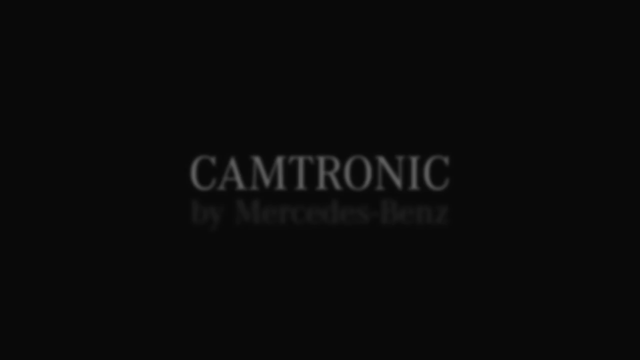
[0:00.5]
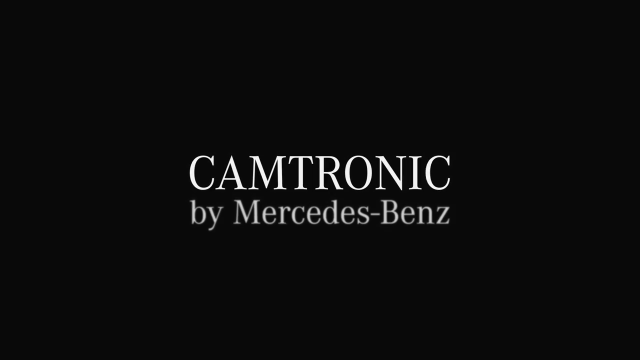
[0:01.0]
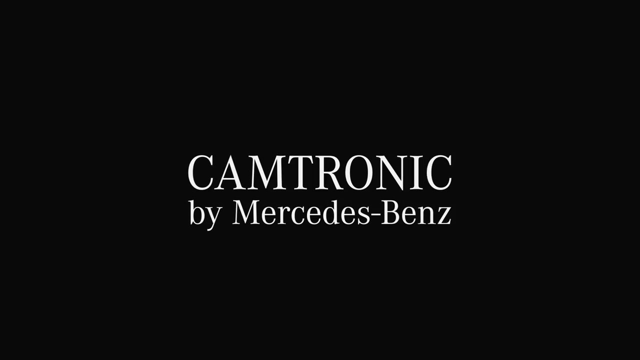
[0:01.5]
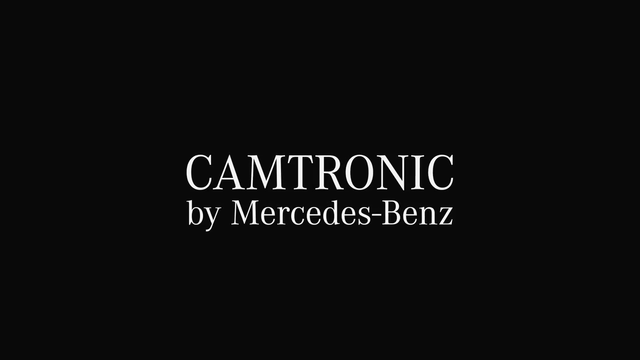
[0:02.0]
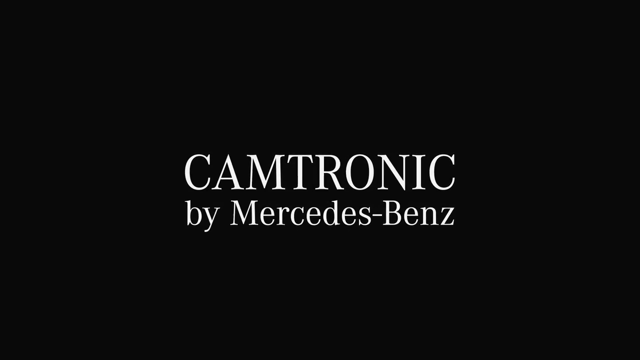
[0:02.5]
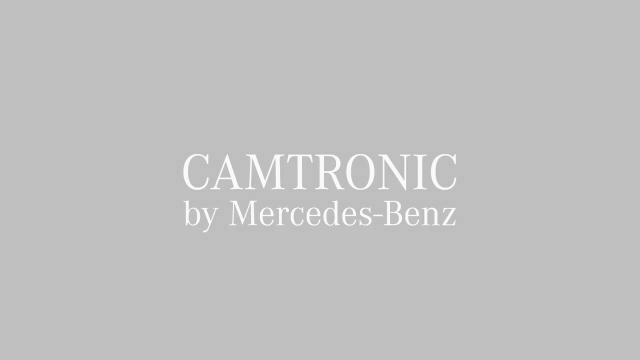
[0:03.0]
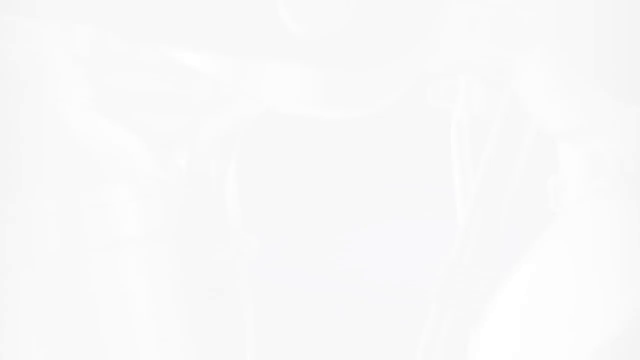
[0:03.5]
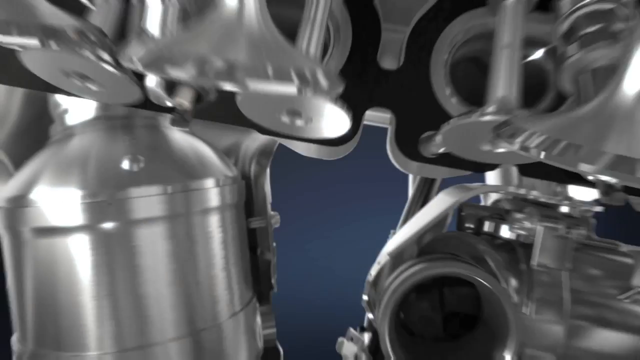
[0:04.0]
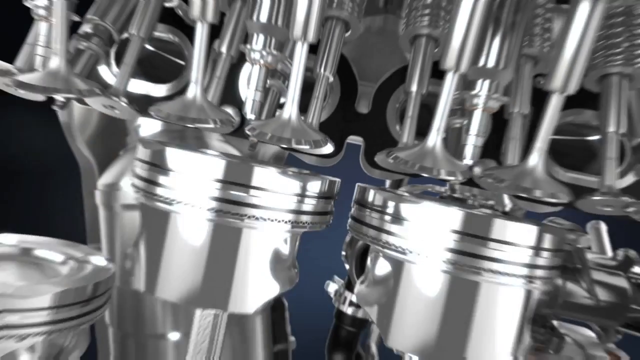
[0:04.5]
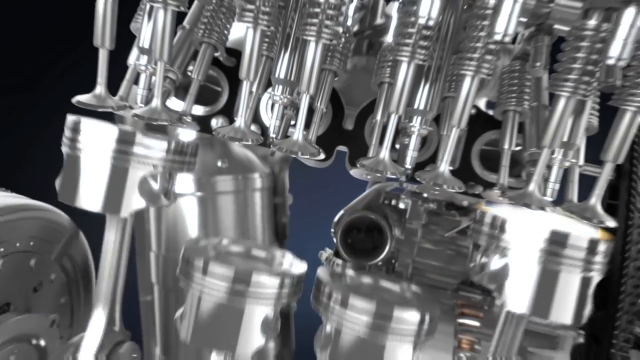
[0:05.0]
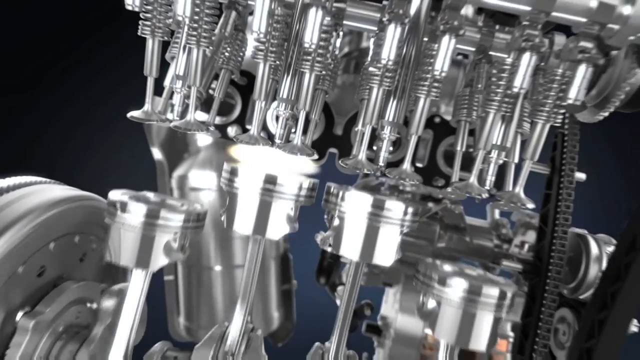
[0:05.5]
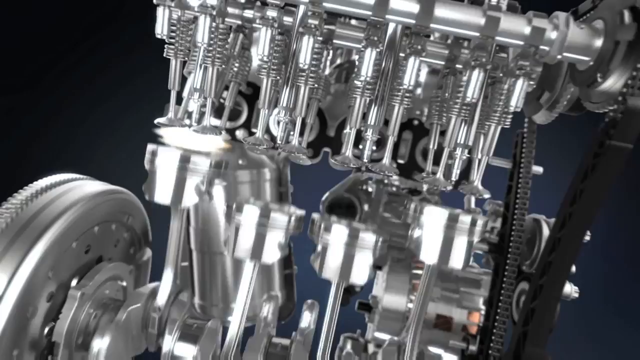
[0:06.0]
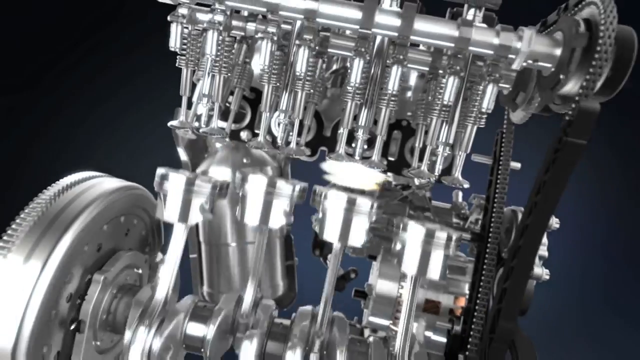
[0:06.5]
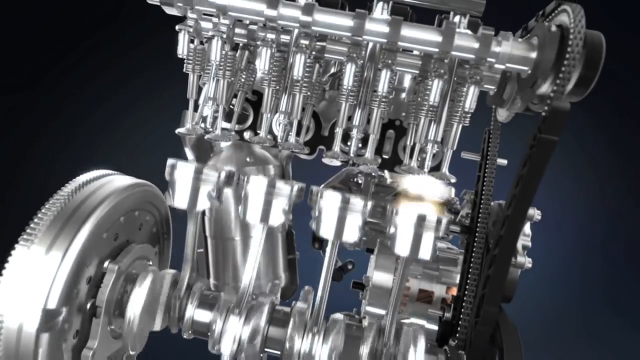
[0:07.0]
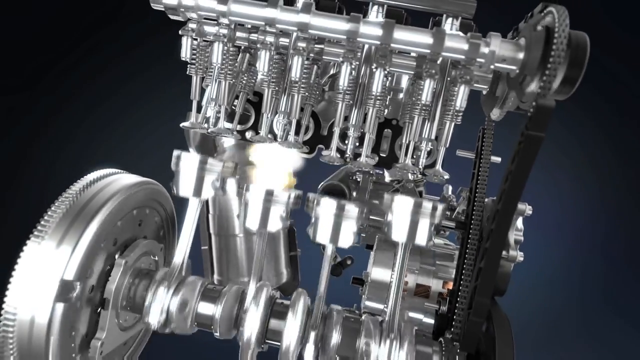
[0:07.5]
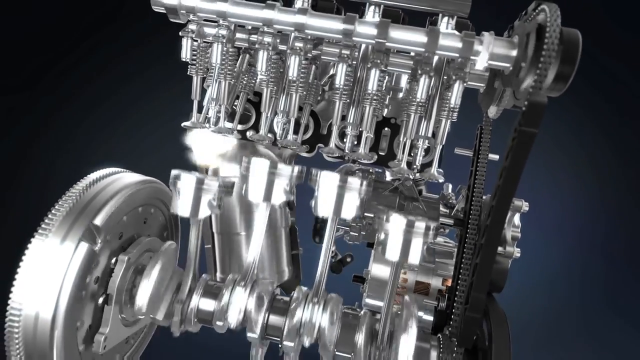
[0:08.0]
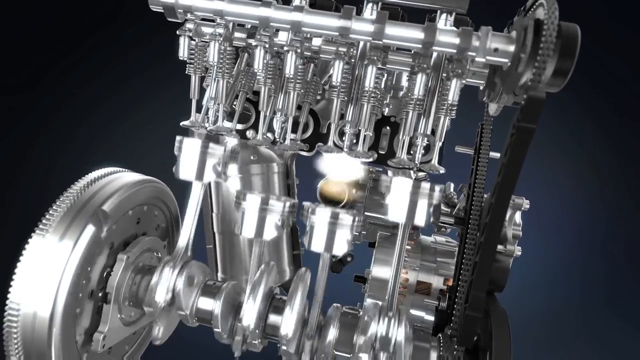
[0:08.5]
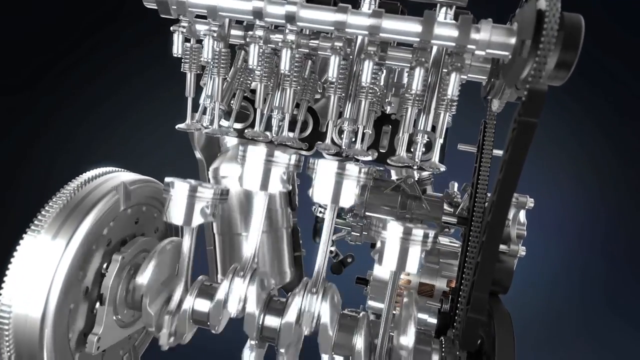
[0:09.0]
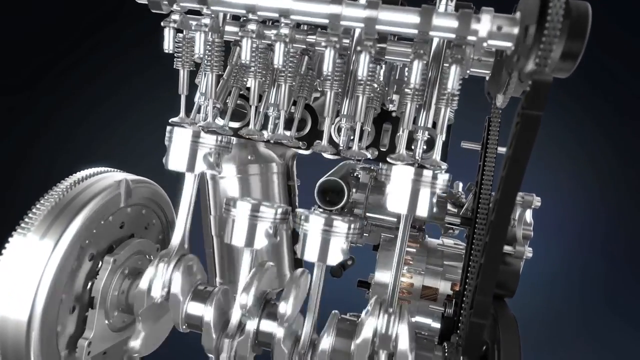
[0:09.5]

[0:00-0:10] The video opens on a fully black screen with white capital letters toward the middle reading "Camtronic by Mercedes-Benz". It then moves into a kind of engine with circles visible in the area and parts going up and down, as if pumping inside the vehicle. The engine looks gray and chrome colored and somewhat shiny, and the inner workings keep moving up and down.